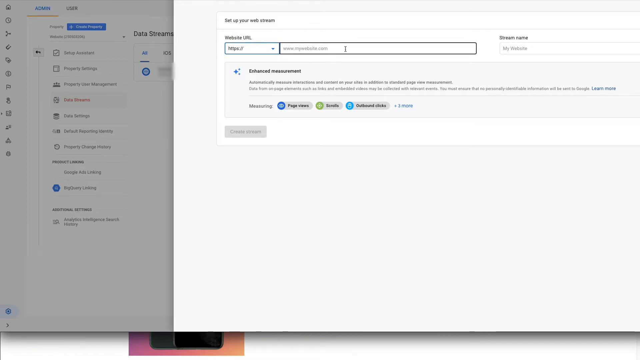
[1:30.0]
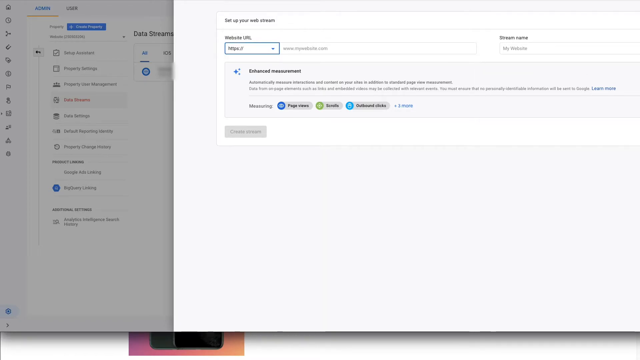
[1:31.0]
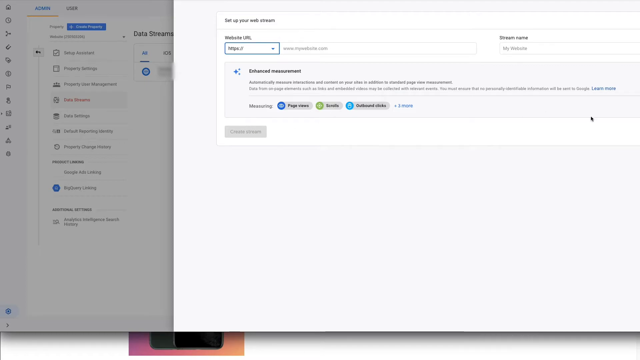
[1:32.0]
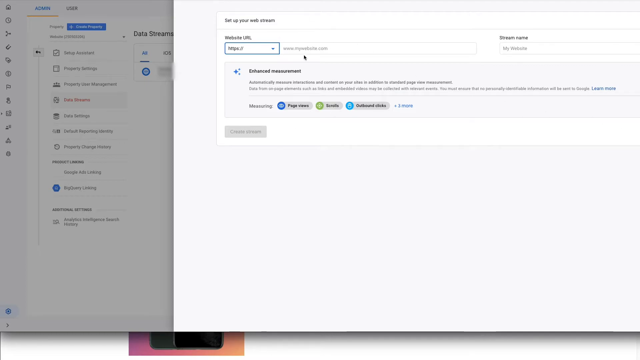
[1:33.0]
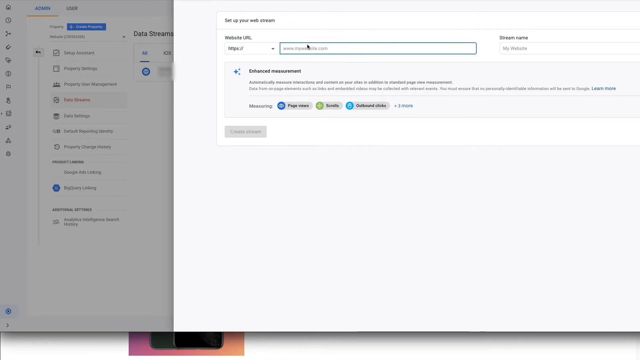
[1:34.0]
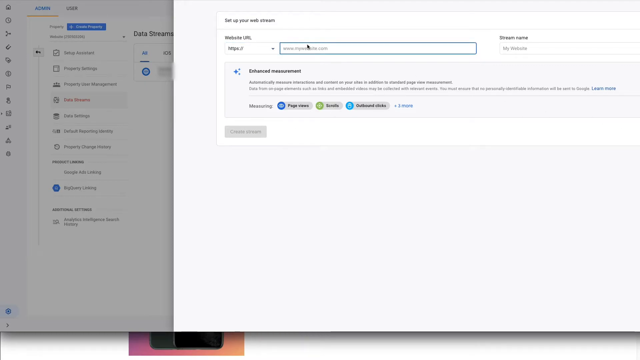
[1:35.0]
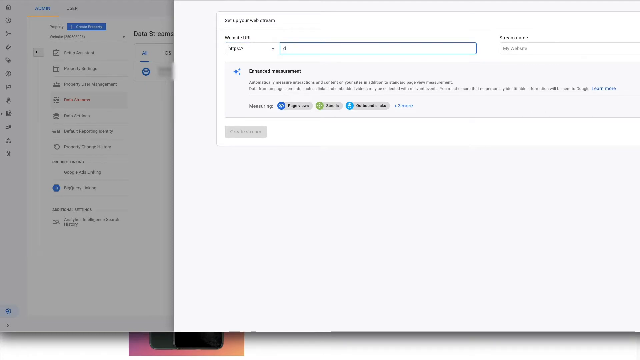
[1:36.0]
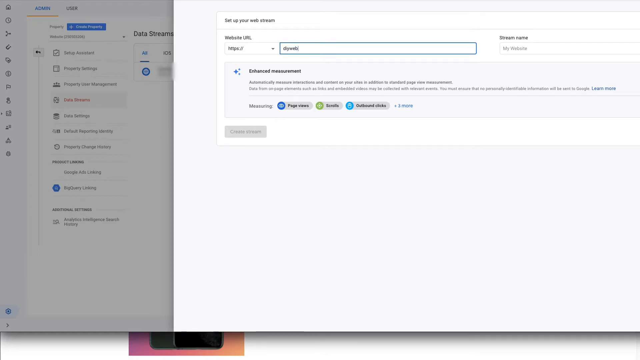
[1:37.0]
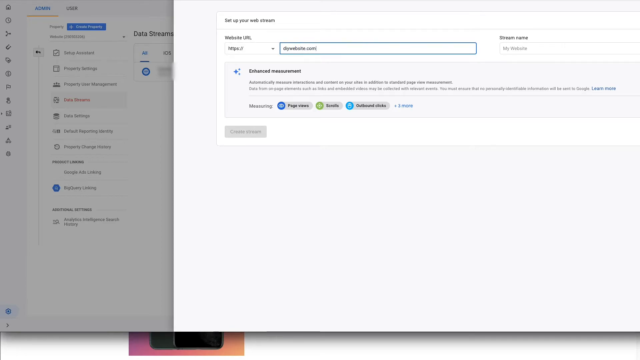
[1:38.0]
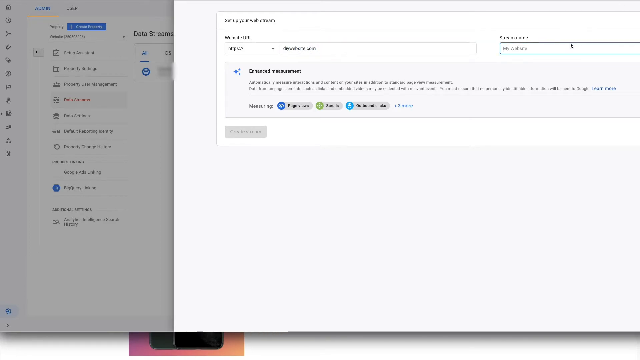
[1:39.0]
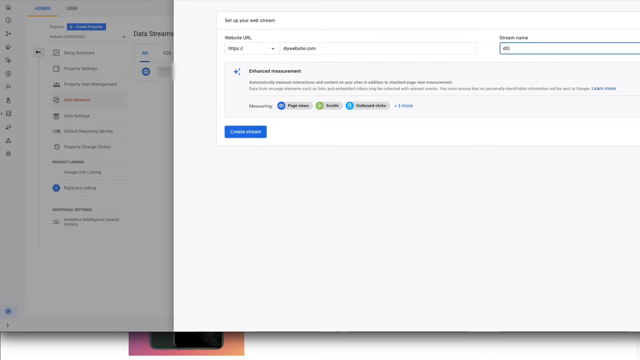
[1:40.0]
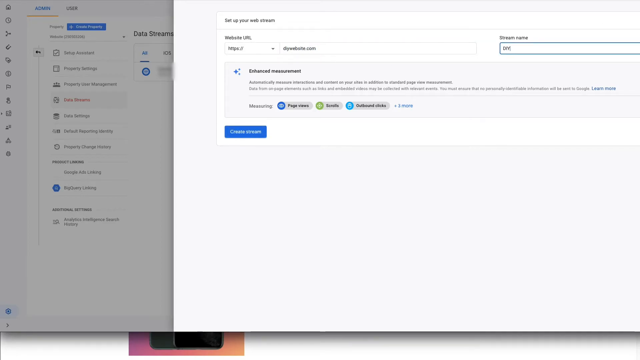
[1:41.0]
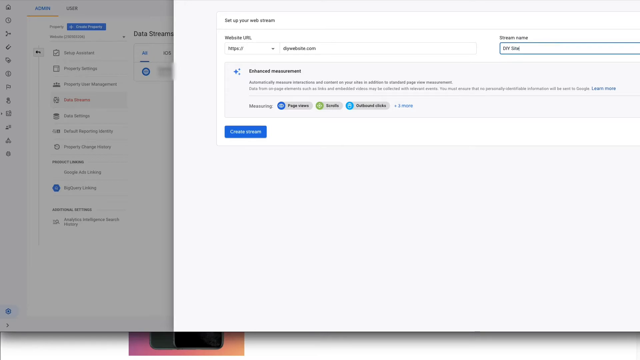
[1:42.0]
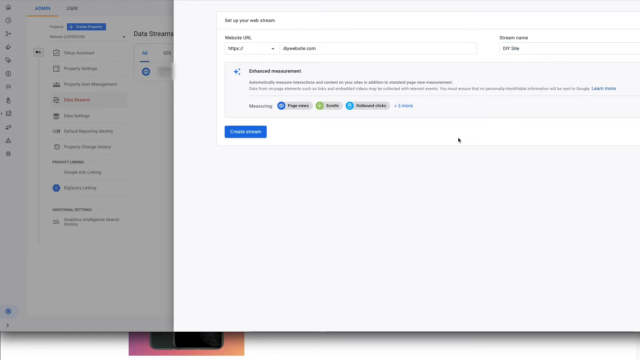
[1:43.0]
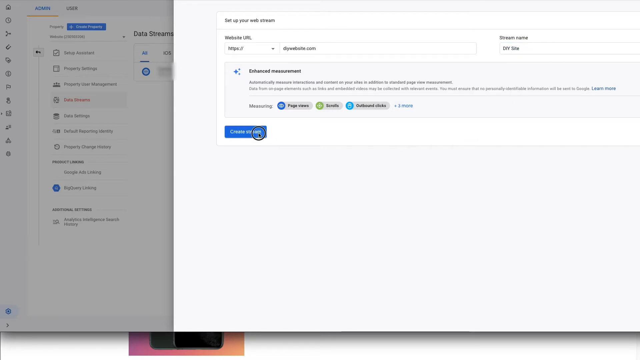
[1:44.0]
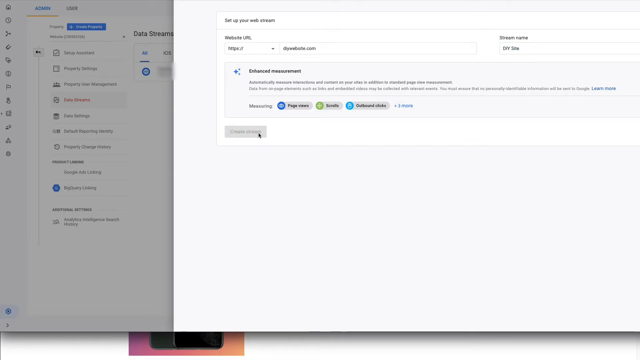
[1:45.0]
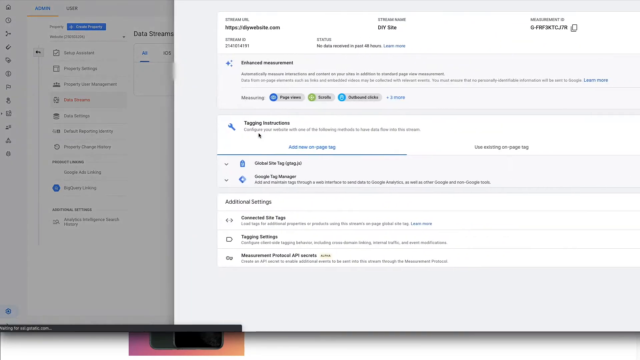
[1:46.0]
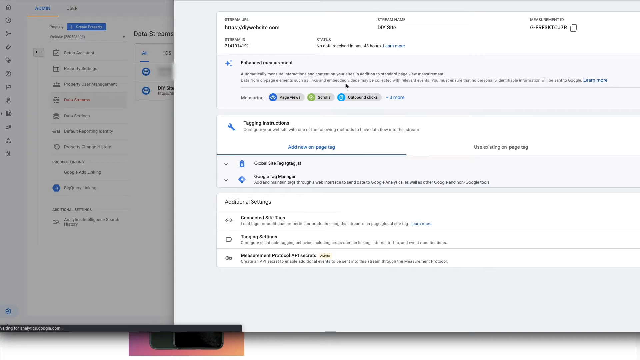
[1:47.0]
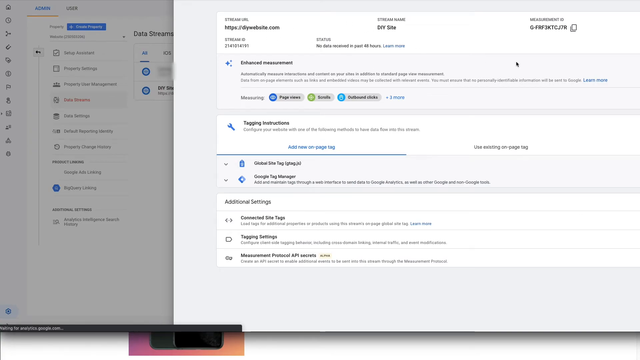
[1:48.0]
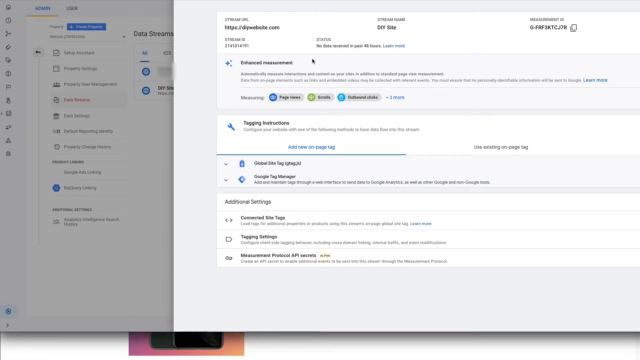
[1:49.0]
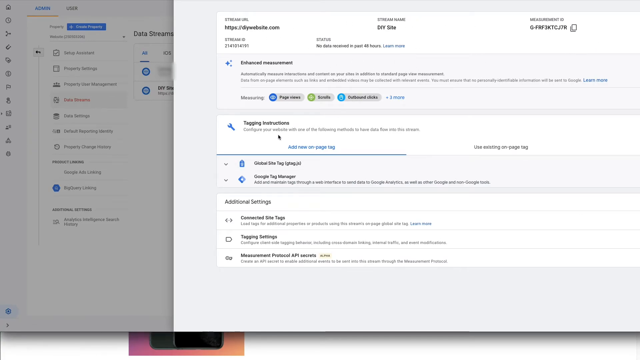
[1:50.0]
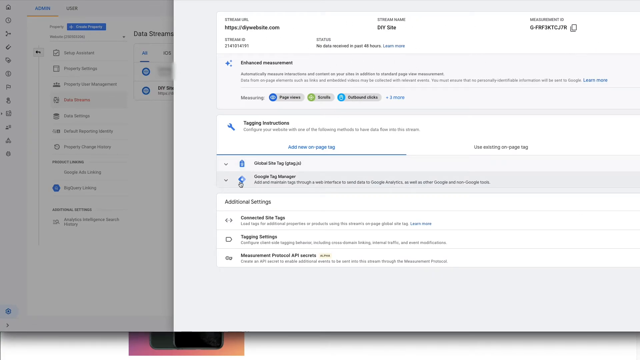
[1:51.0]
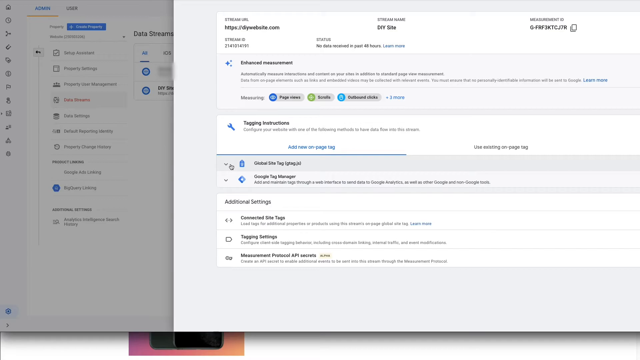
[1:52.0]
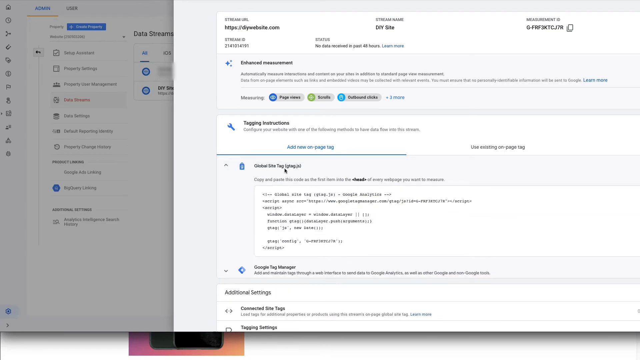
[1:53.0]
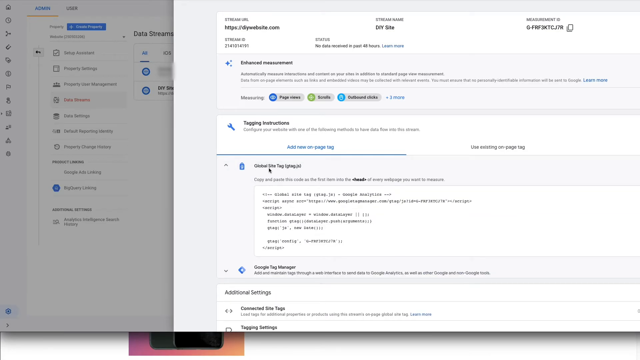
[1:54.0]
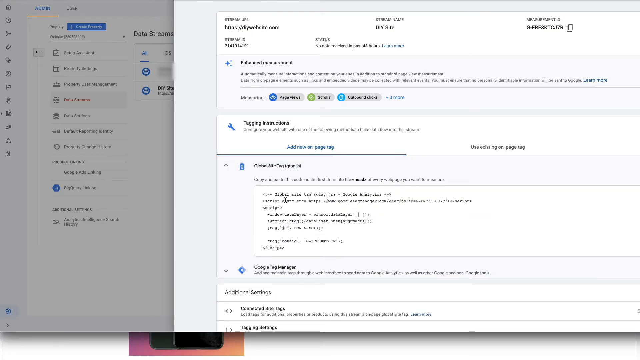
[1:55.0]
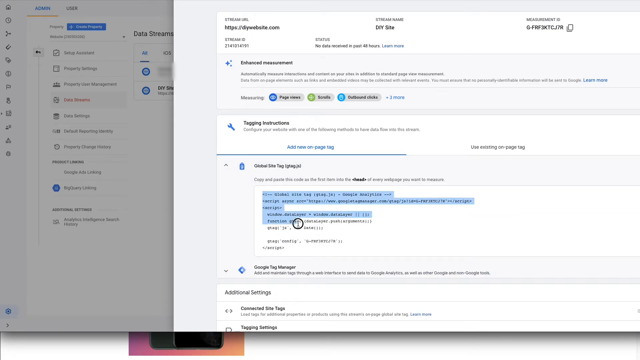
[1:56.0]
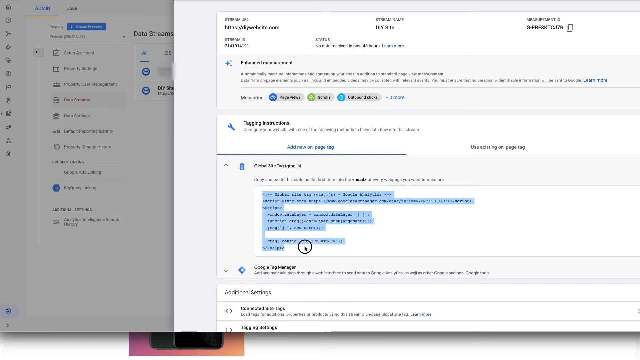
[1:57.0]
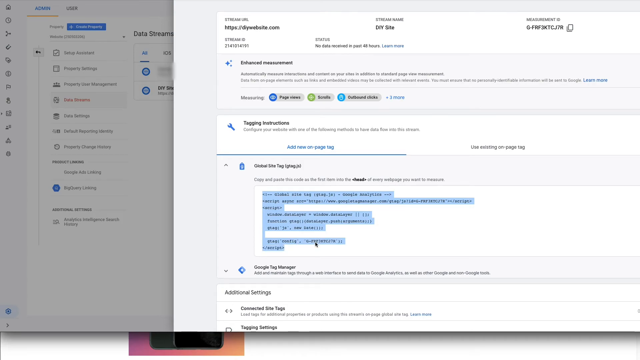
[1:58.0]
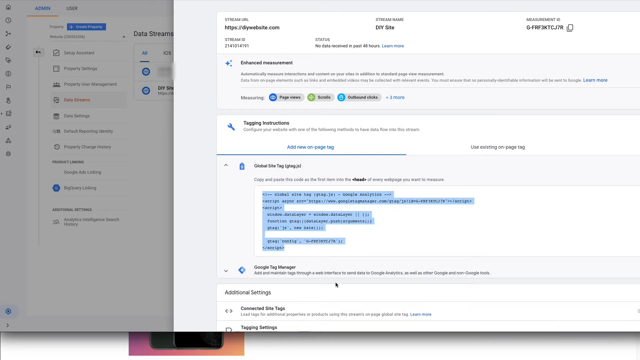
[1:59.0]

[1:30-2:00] Still in the menu under data streams, the person drills down to the website options and apparently enters a specific website. A menu then shows the stream ID, the stream name, apparently the measurement ID, the status, and enhanced measurement information. There appear to be tagging instructions for adding new page tags, existing page tags, an option for site tags, Google Tag Manager, and beneath that a menu for additional settings, apparently including connected site tags, what appears to be tagging settings, and measurement protocol settings. The person drills further into sub-menus under the website option for more specific data.